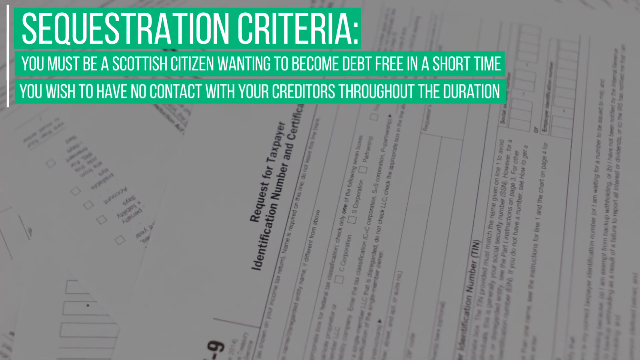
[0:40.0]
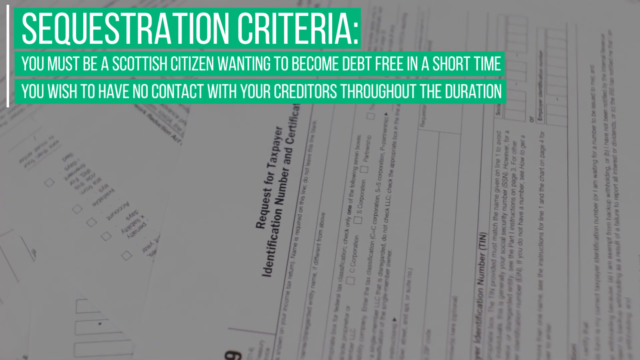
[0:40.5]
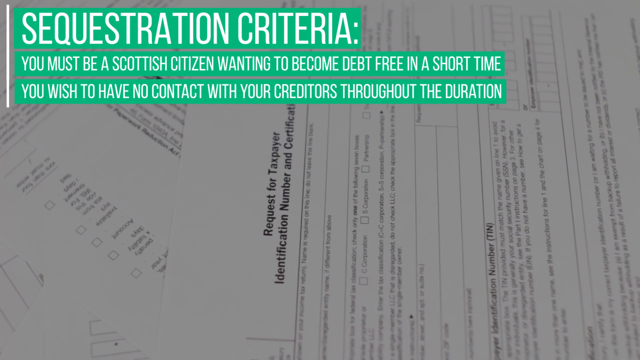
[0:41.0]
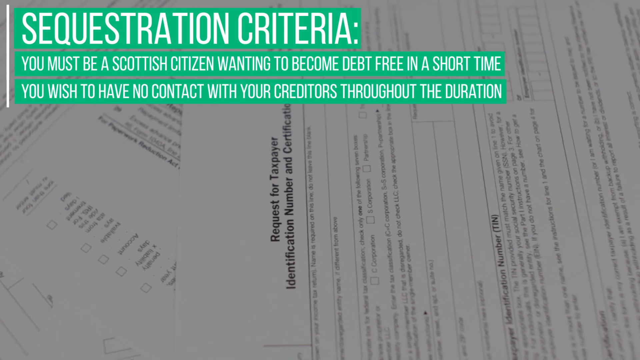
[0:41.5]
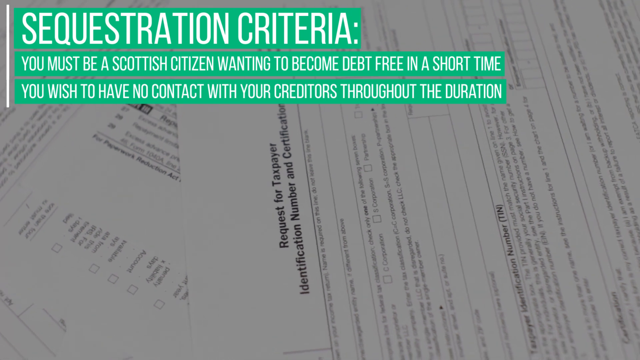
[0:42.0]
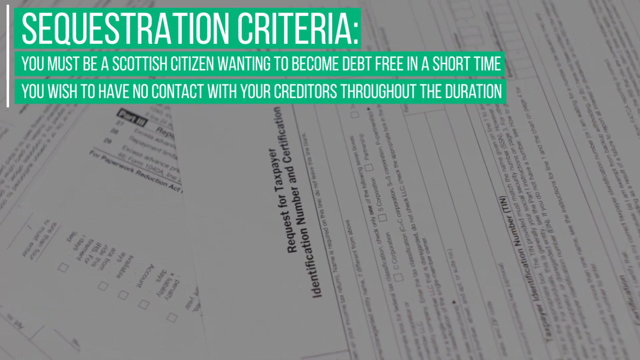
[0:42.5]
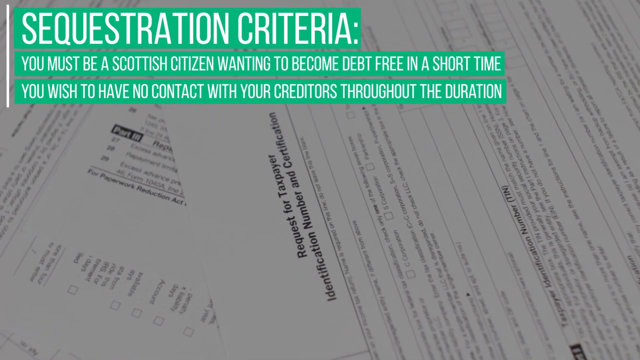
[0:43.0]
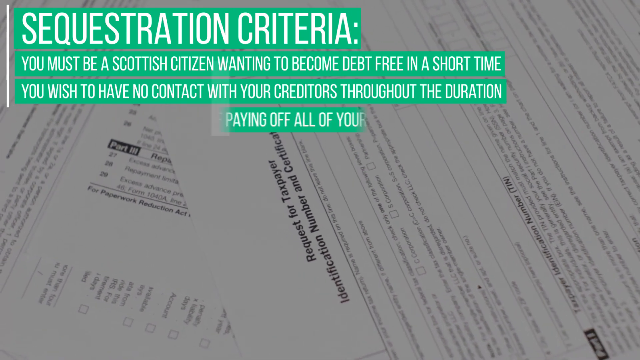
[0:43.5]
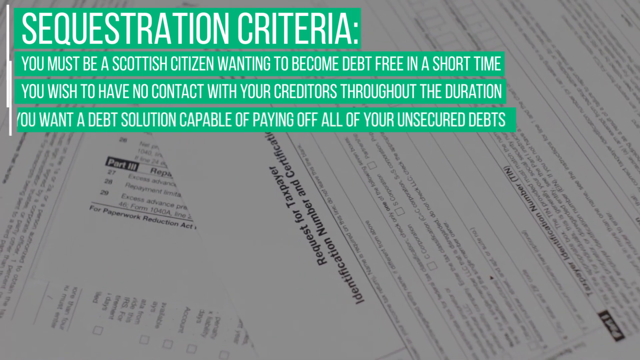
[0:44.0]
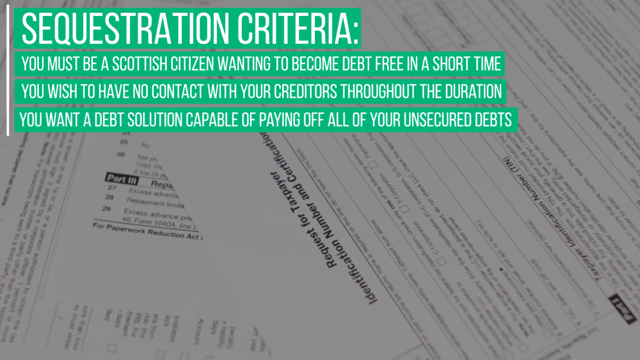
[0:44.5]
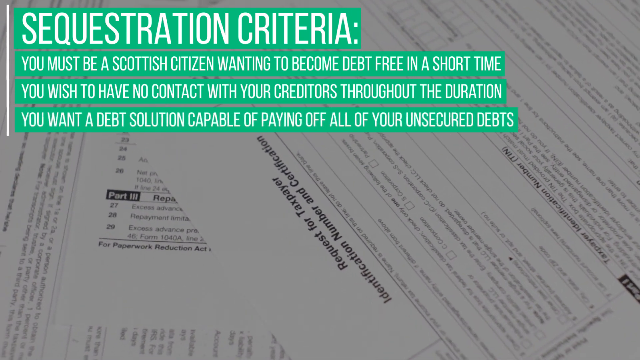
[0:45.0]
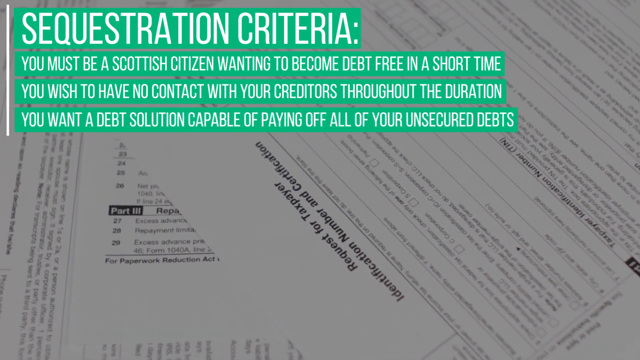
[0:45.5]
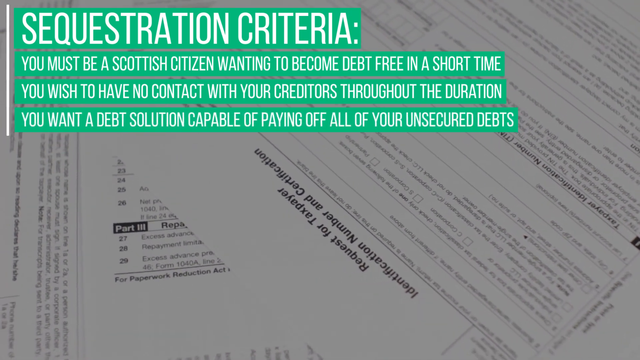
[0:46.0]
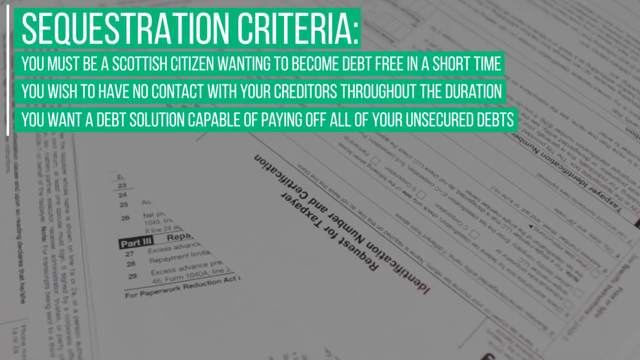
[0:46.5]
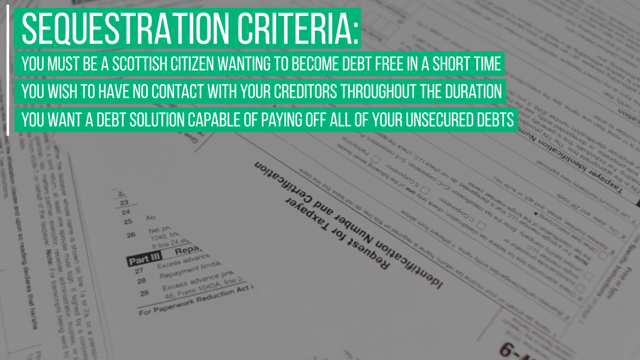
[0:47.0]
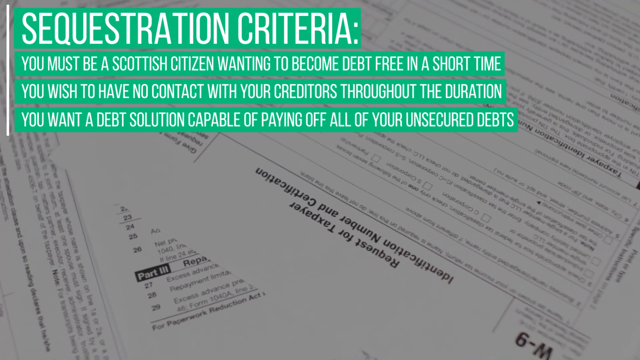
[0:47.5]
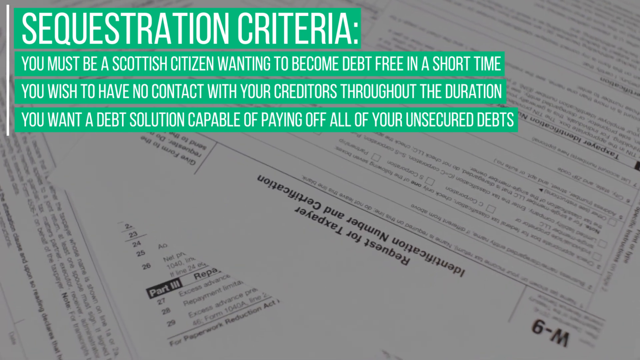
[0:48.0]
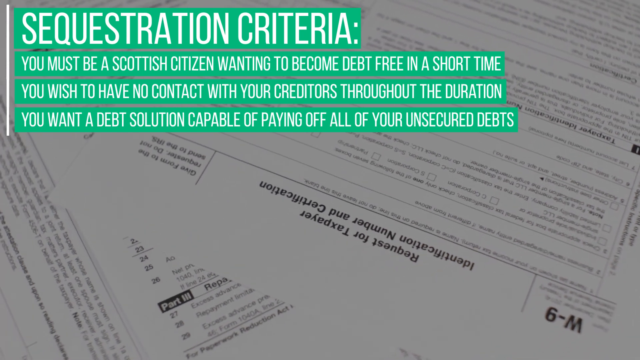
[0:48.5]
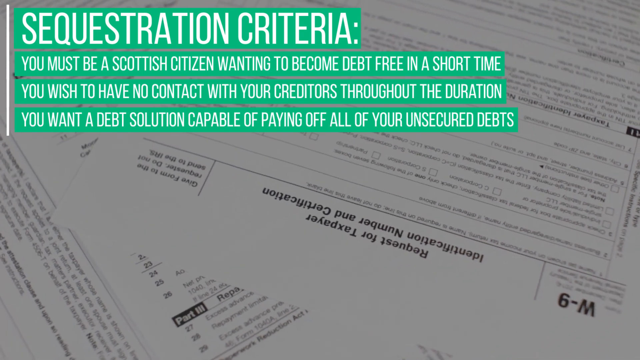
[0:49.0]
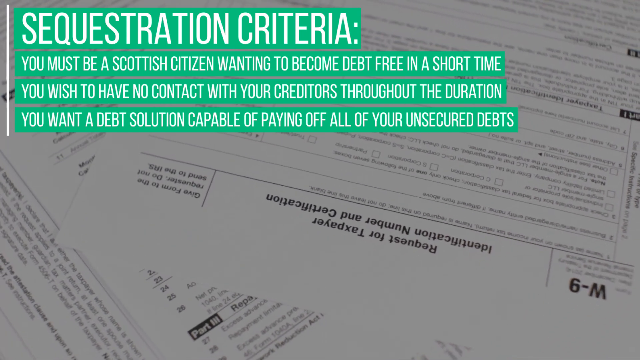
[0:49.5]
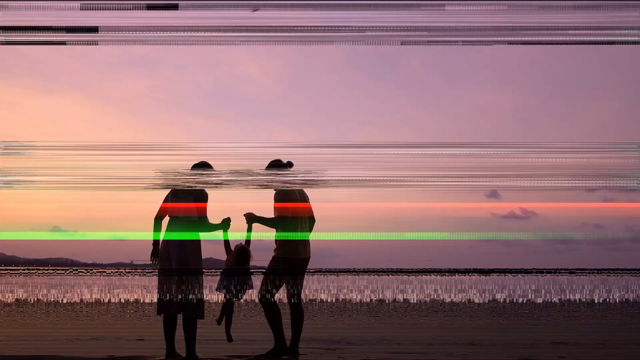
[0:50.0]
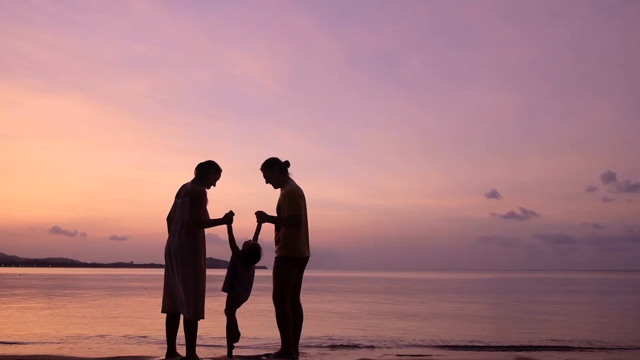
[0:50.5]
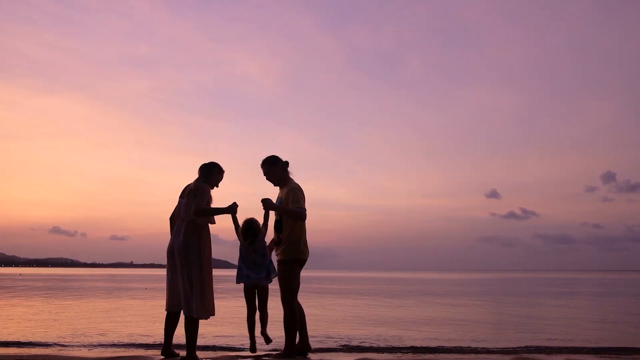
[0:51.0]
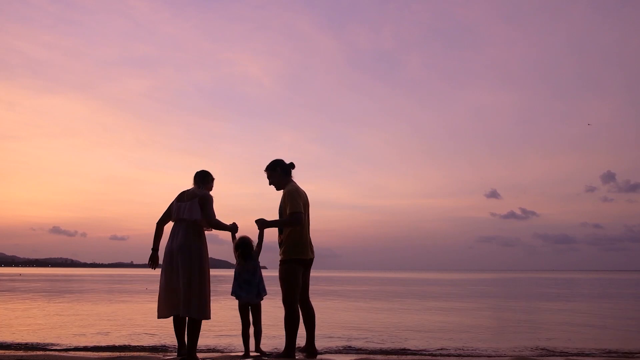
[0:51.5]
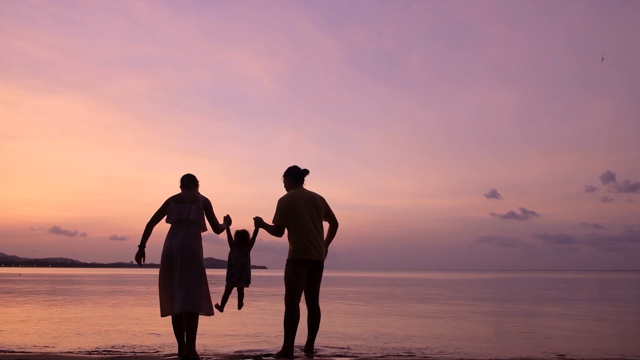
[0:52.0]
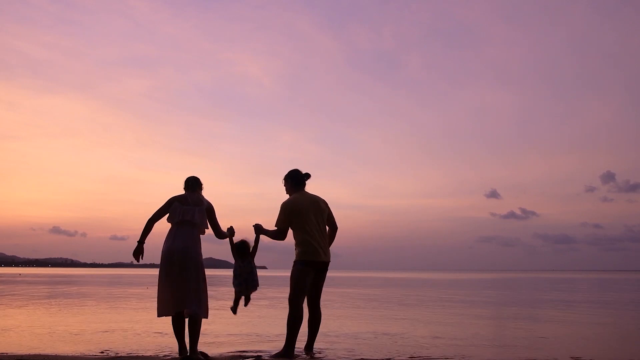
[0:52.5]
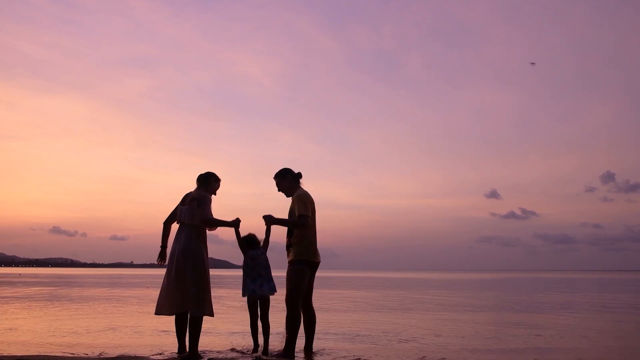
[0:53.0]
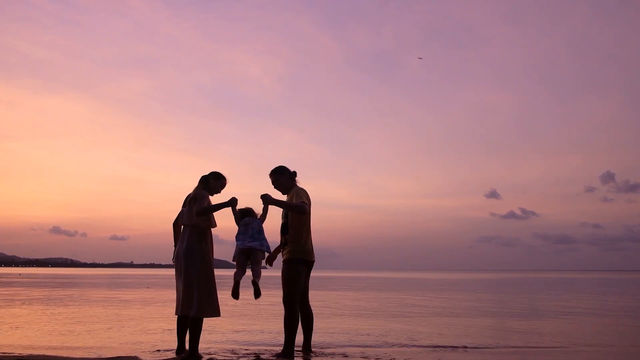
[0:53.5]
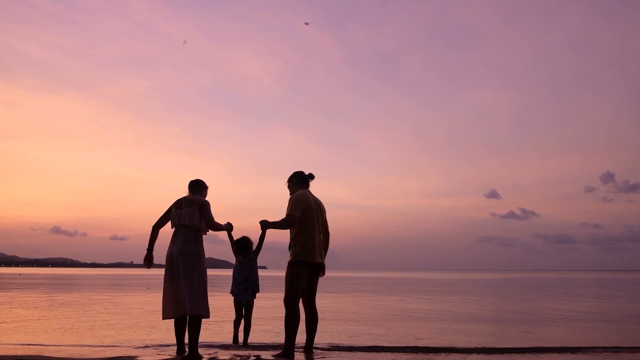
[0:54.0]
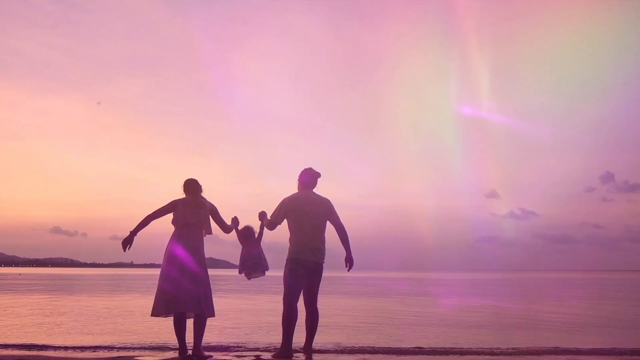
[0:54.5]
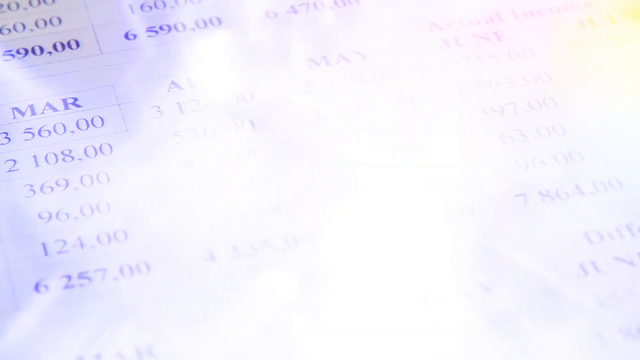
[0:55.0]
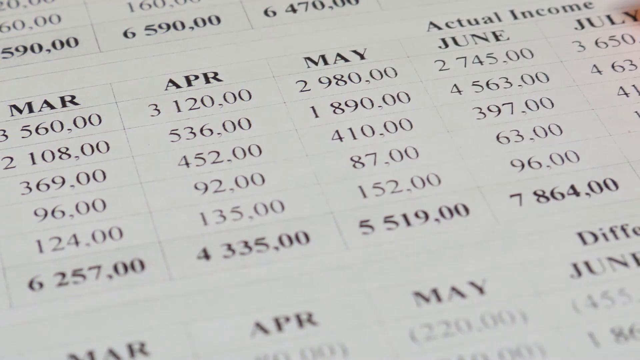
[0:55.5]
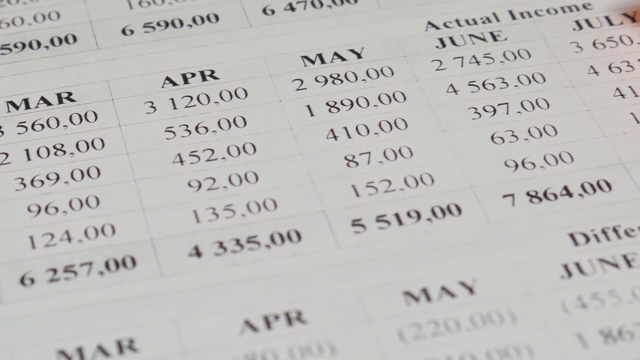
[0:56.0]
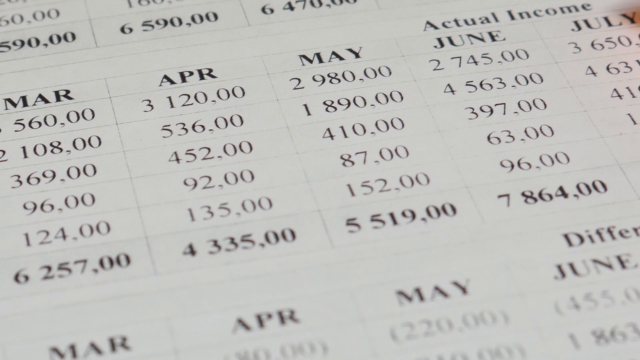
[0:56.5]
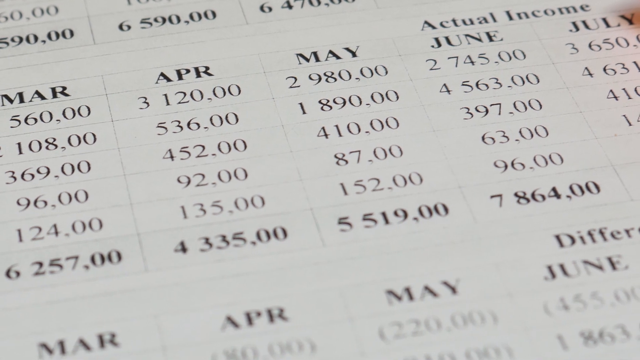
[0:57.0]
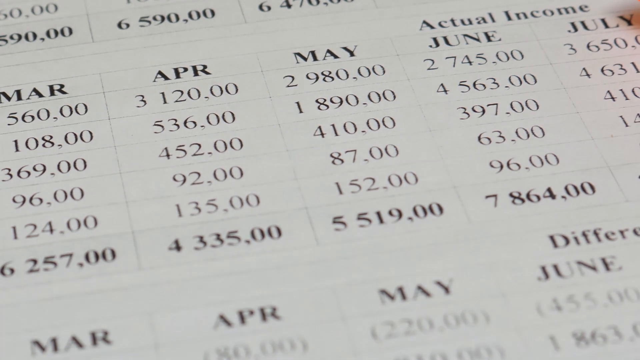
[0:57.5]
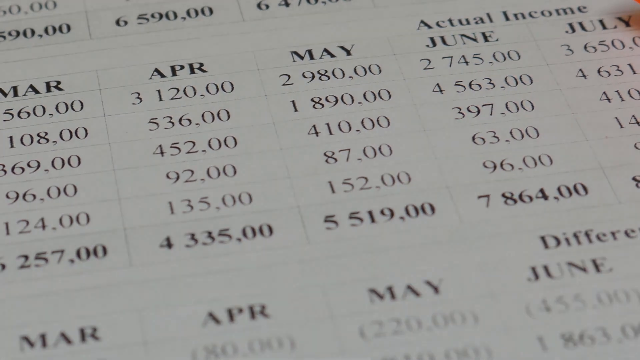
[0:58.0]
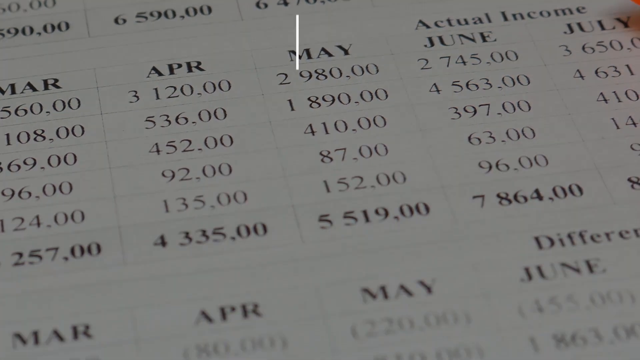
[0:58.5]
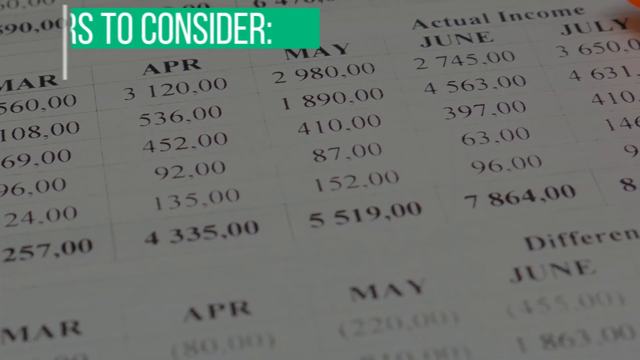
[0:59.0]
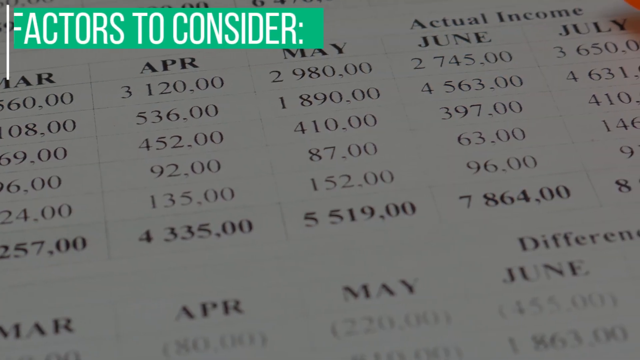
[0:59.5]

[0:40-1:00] The on-screen text reads "sequestration criteria": "You must be a Scottish citizen wanting to become debt free in a short time," "You must wish to have no contact with your creditors during the duration," and "you want a debt solution capable of paying off all of your unsecured debts." Next, a family on a beach swings their child between their arms. After that, a screen titled "factors to consider" appears, but it cuts off before its points can be seen.